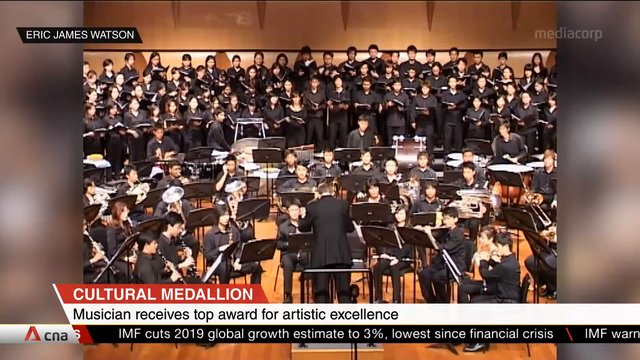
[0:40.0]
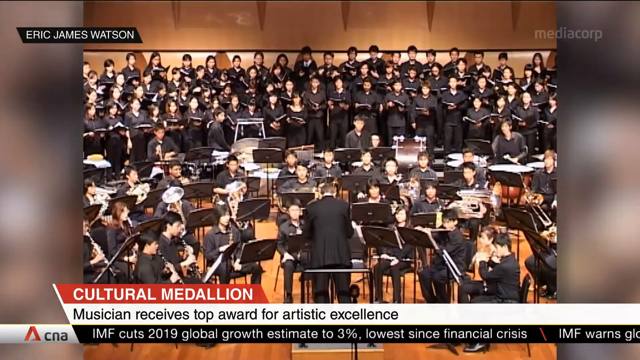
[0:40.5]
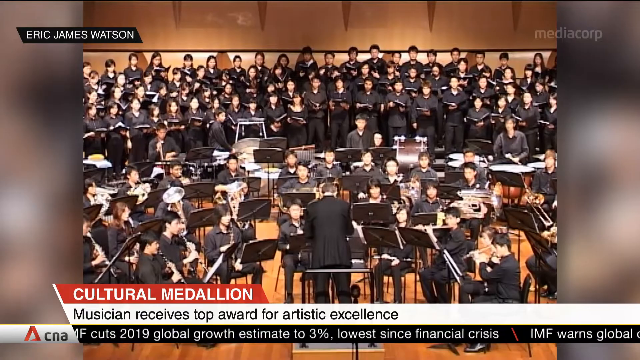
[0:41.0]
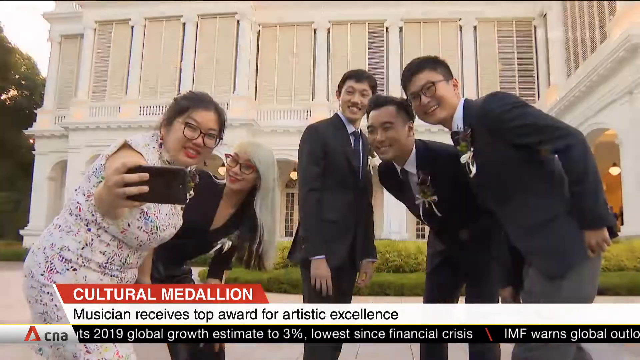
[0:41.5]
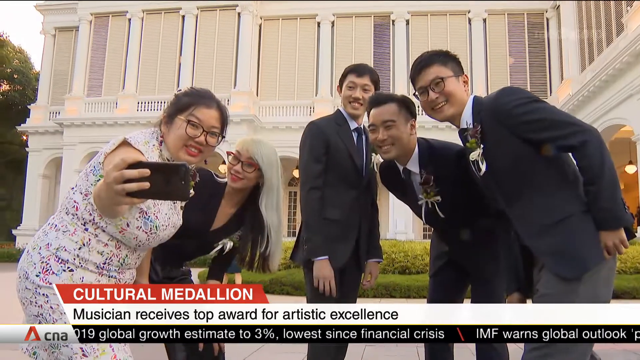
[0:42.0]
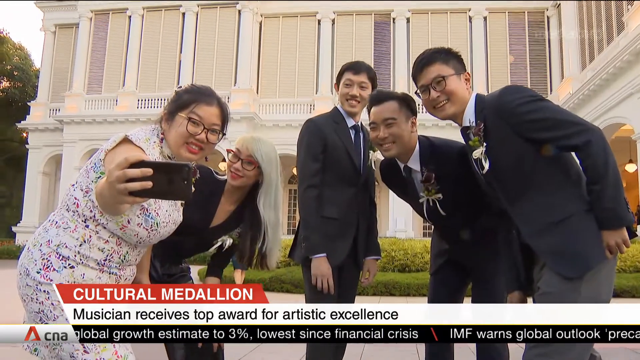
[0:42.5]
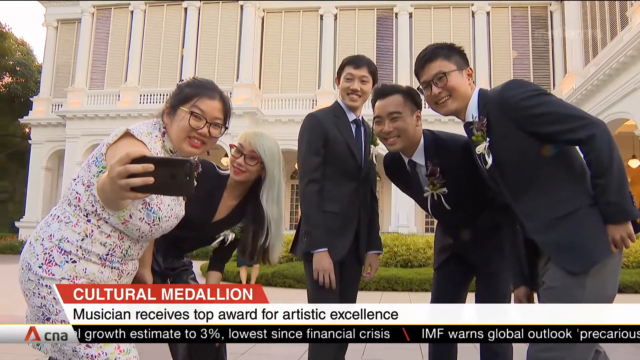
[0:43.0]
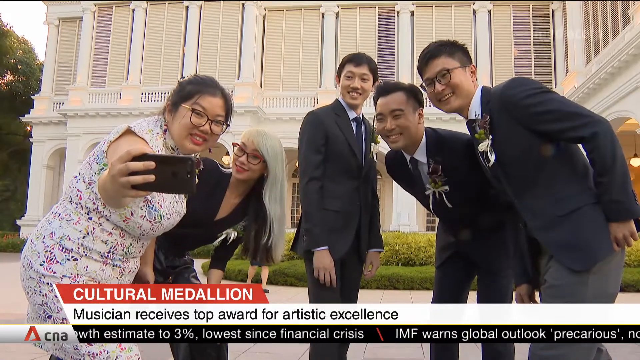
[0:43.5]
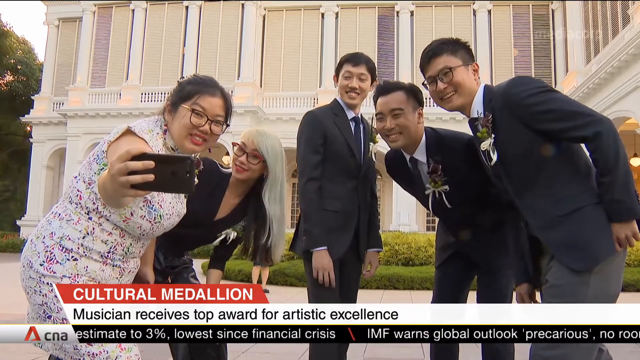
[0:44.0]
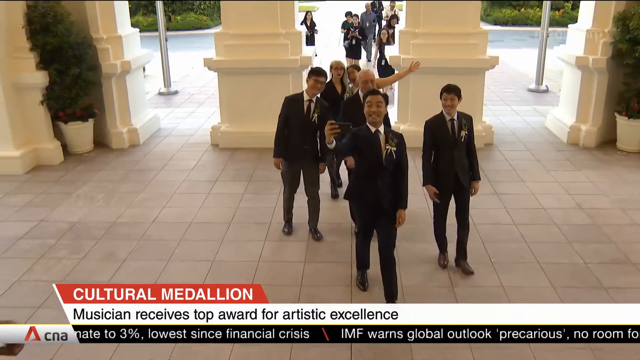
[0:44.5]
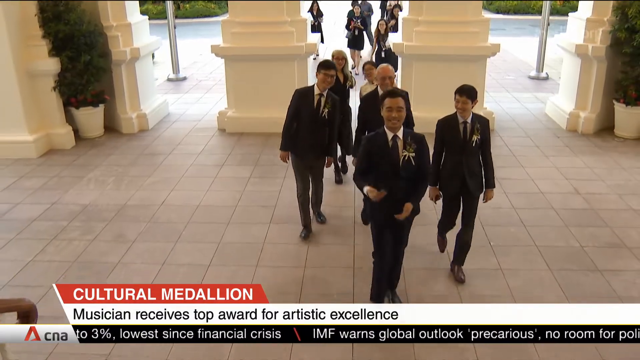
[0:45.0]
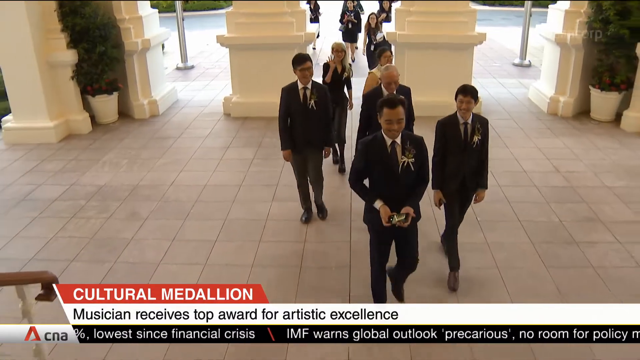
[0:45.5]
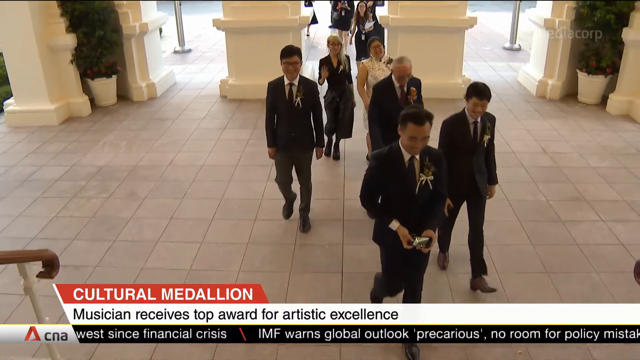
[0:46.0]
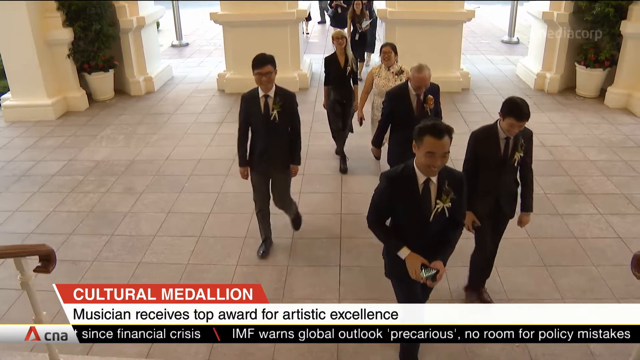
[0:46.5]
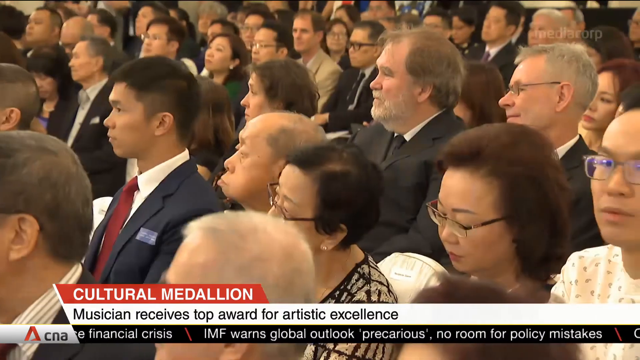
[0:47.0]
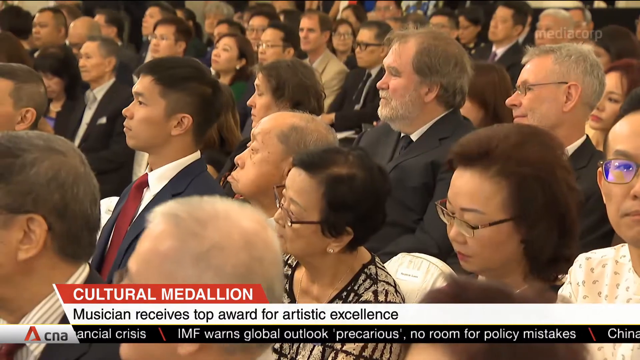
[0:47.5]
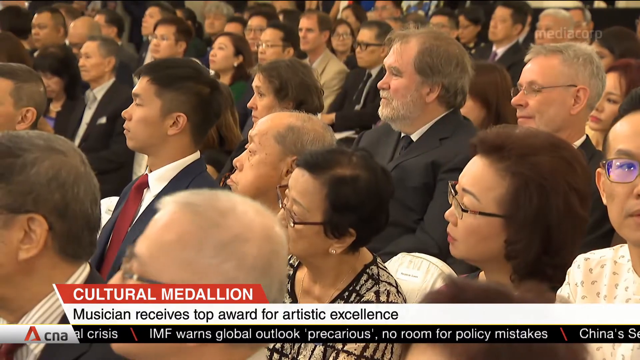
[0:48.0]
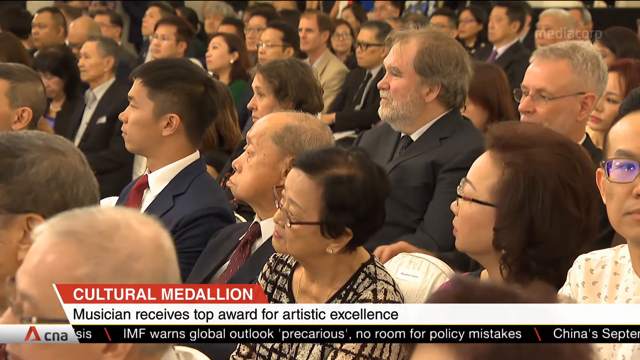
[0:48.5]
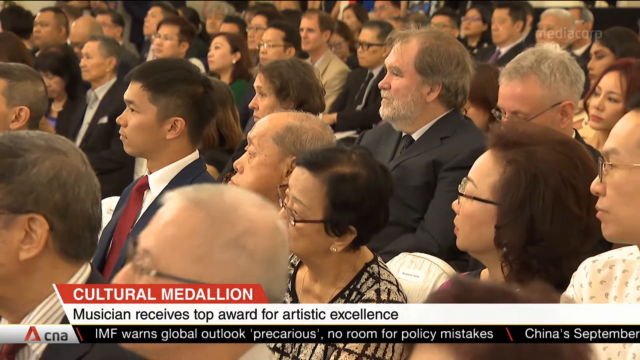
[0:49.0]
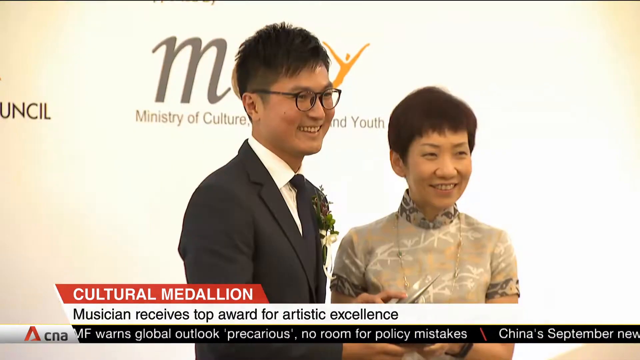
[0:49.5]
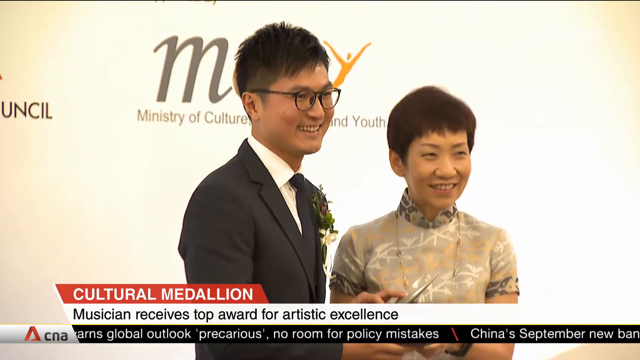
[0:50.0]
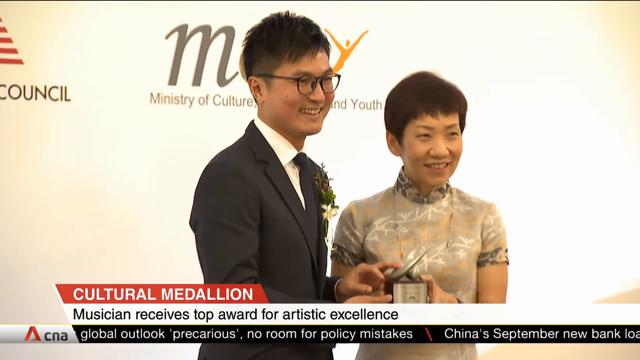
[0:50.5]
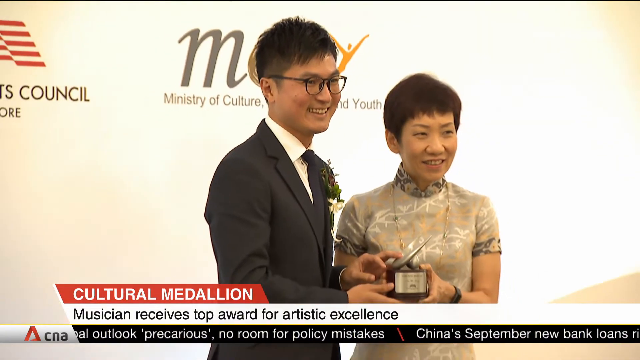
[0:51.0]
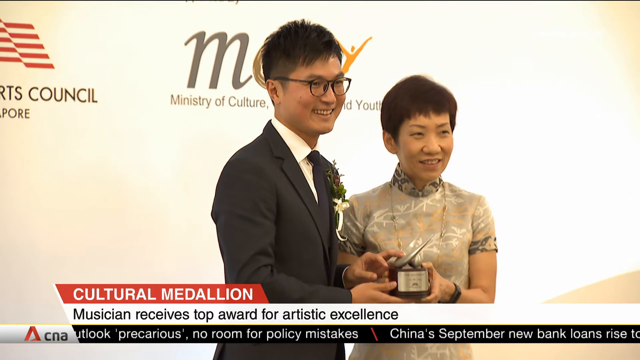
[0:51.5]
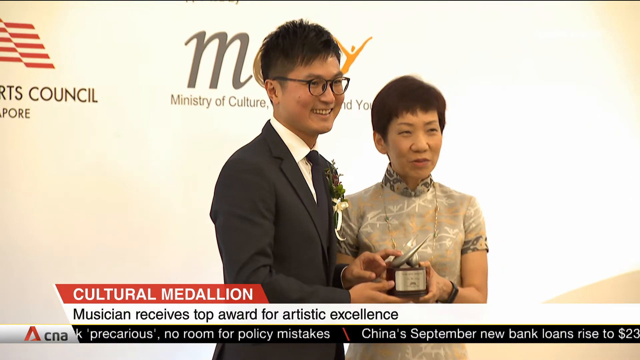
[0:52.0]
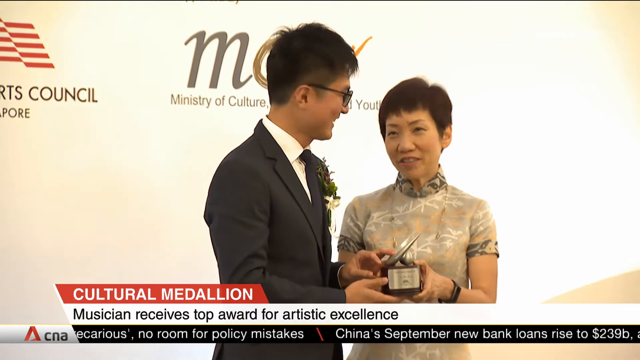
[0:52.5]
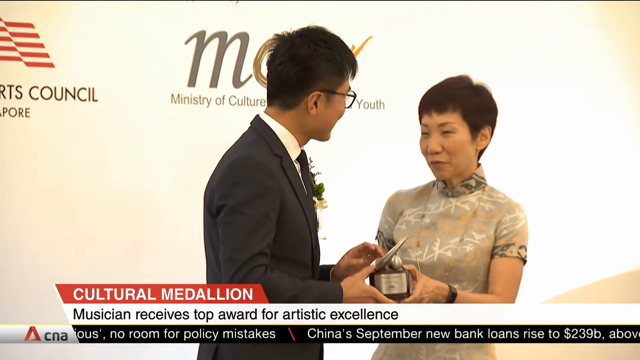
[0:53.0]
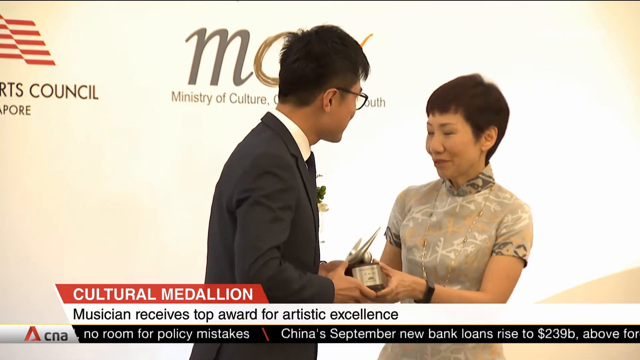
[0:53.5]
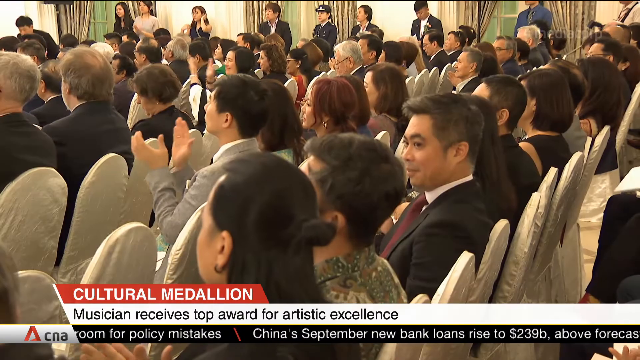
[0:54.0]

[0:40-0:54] An elderly gentleman conducts an orchestra of many musicians playing different instruments. Then five young people appear: two young women, one with dark hair and glasses and one with bleach-blonde hair and glasses, and three young men. They all wear boutonnieres, flowers in their lapels, and are perhaps honorees from the orchestra. They look very happy and take a selfie. More selfies are taken, and the young people walk into the building. More people are then shown holding their awards and posing for photos.